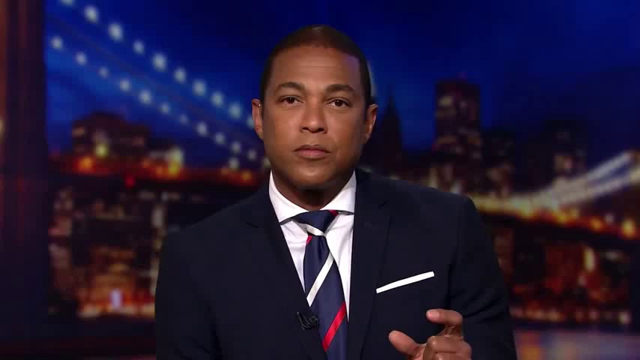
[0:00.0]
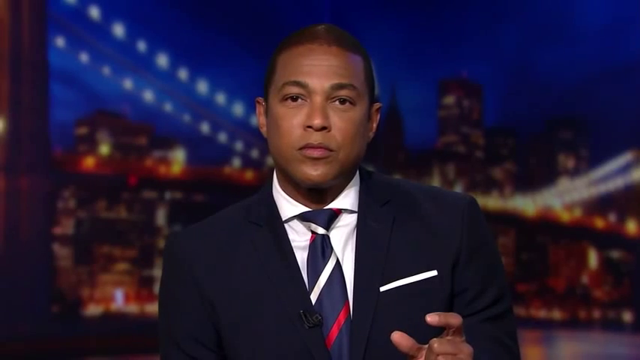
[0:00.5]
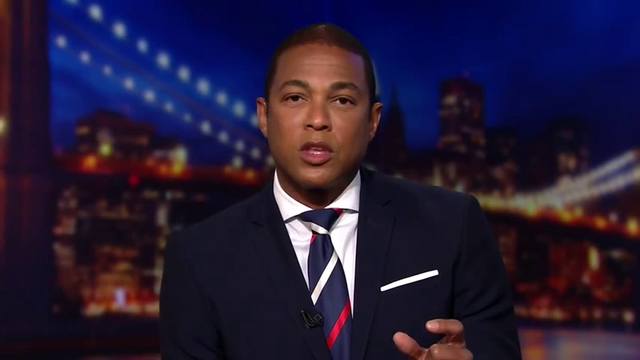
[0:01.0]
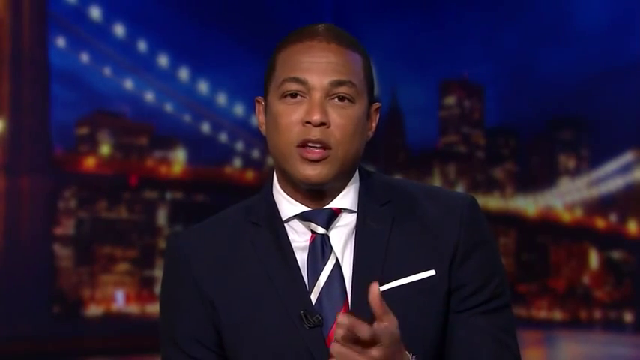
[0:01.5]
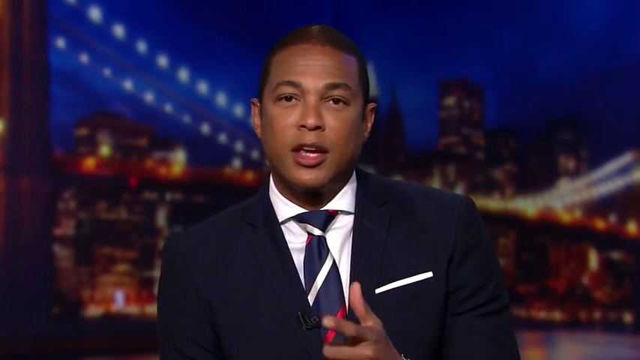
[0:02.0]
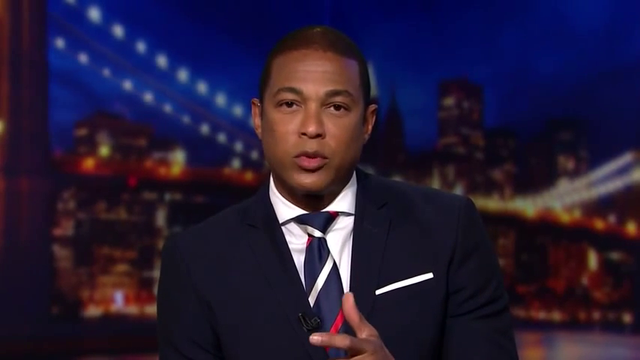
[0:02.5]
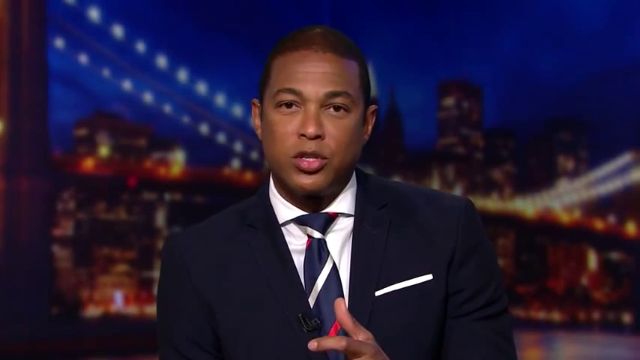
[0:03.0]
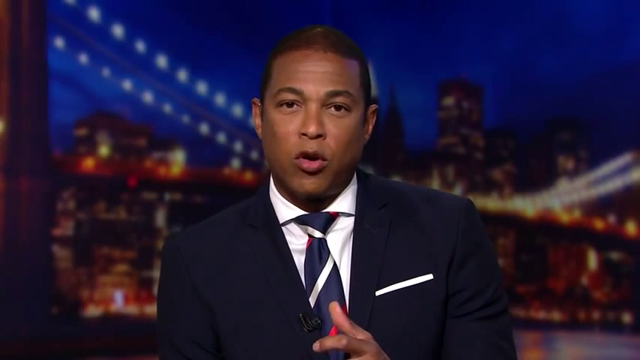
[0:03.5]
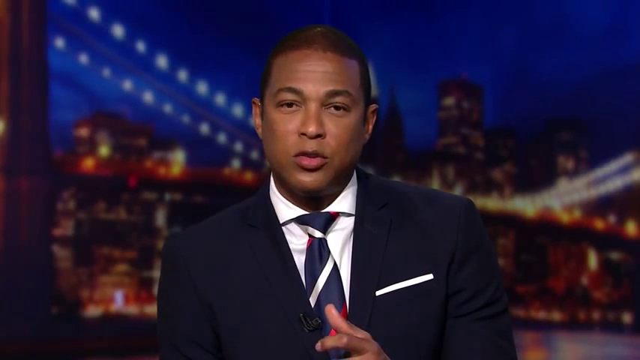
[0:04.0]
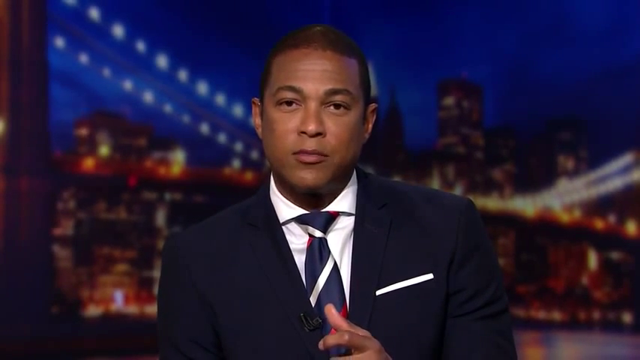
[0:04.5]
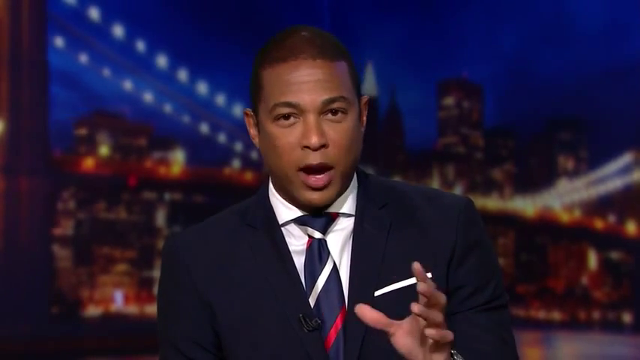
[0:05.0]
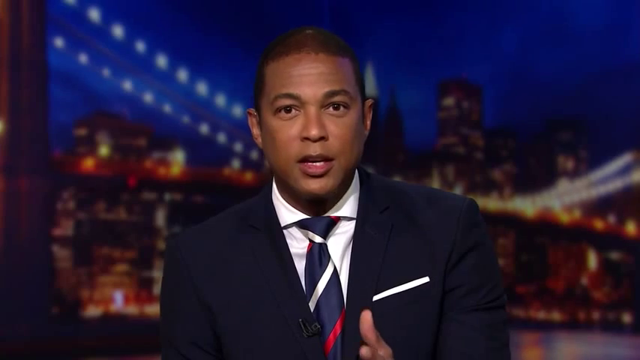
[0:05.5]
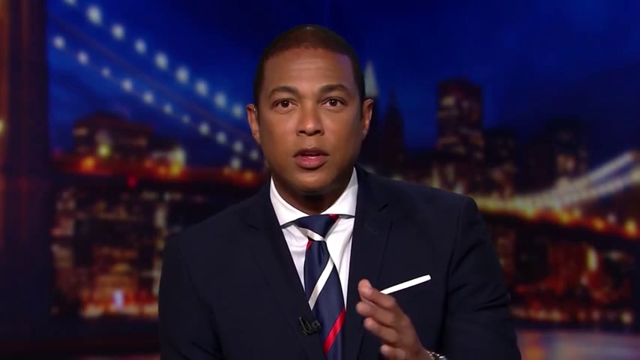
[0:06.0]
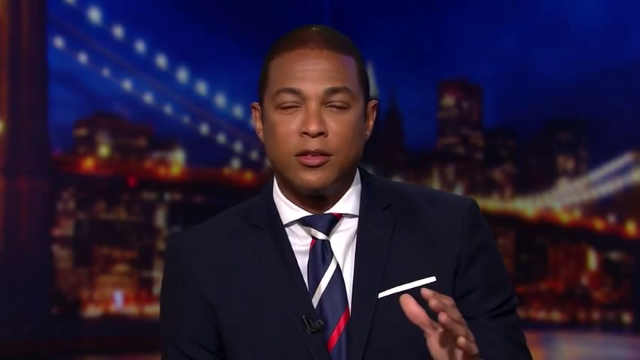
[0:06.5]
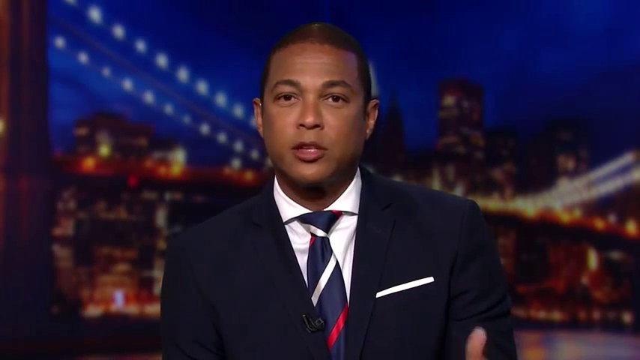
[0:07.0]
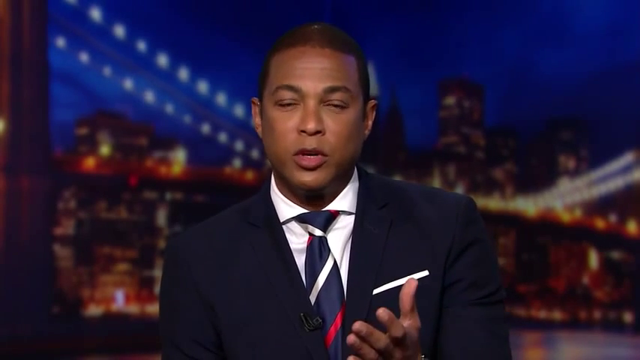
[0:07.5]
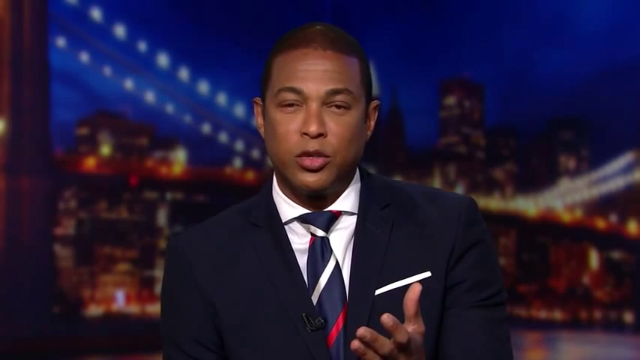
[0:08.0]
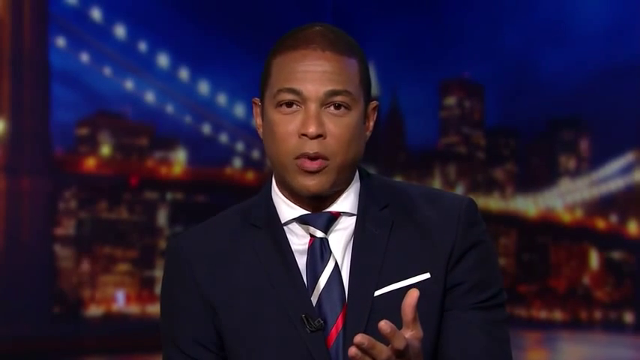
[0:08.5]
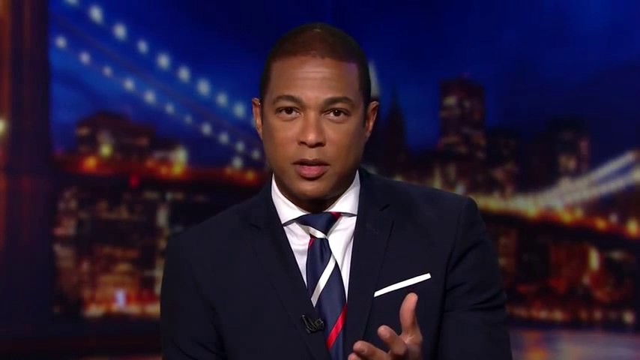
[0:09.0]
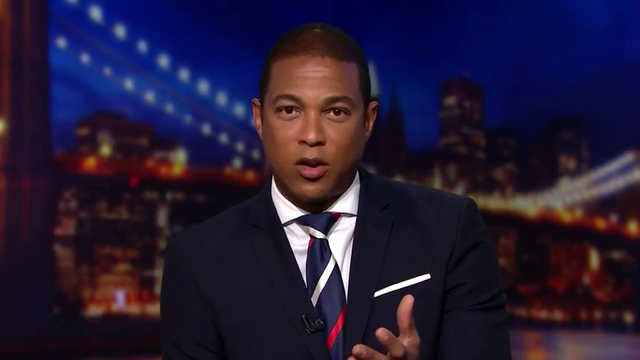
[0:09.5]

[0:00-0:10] A news anchor appears in close-up, seen from the chest up. He wears a dark blazer, a white shirt, and a blue striped tie with red and white stripes. Behind him is a dark city scene of skyscrapers and some lights, somewhat blurry, with a couple of string lights visible in the upper left-hand corner. Along the left-hand side there appears to be the side of a window. His right hand is near the bottom of the frame, gesturing as he speaks, and he maintains fairly intense eye contact with the camera.